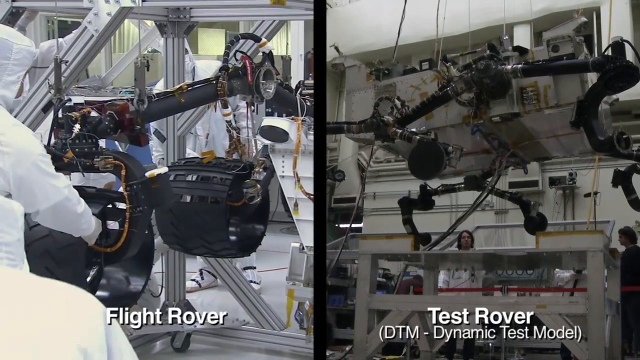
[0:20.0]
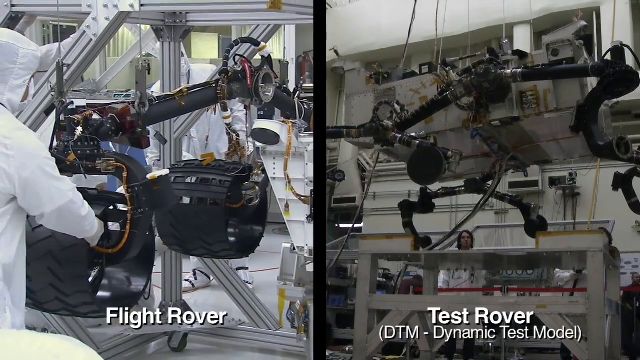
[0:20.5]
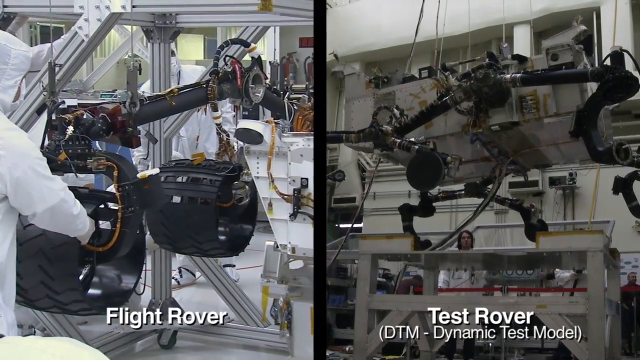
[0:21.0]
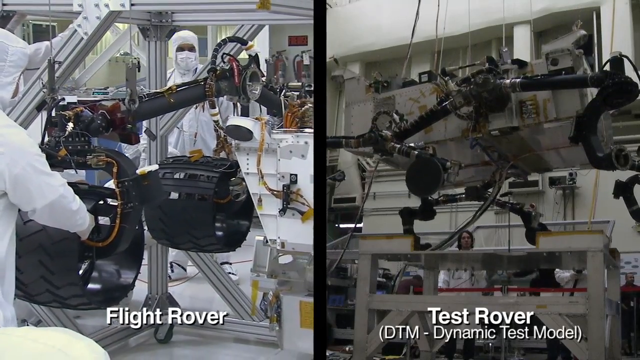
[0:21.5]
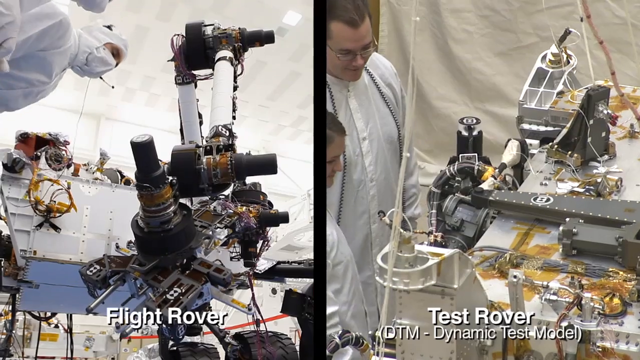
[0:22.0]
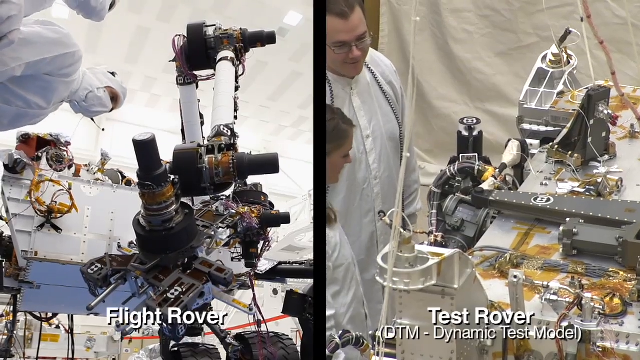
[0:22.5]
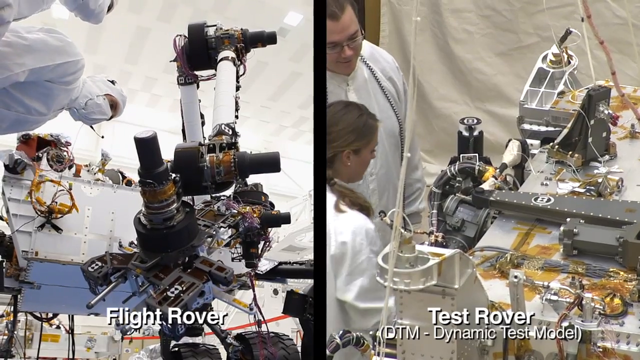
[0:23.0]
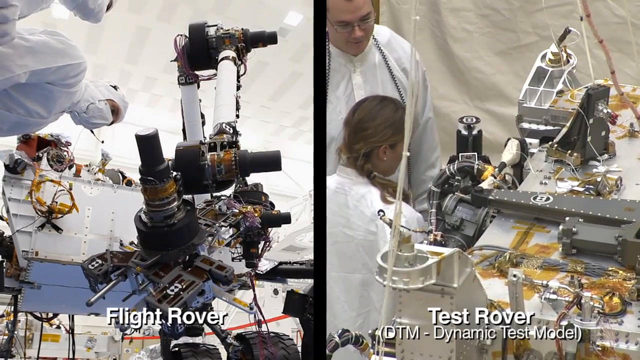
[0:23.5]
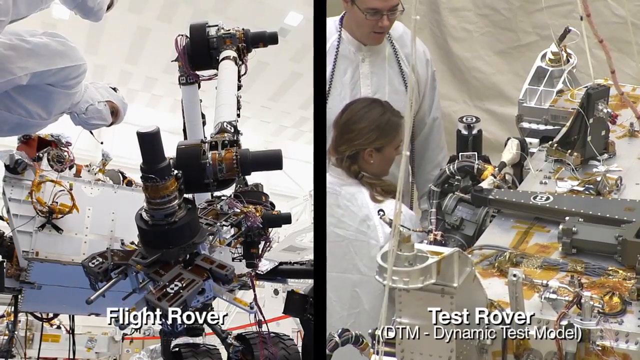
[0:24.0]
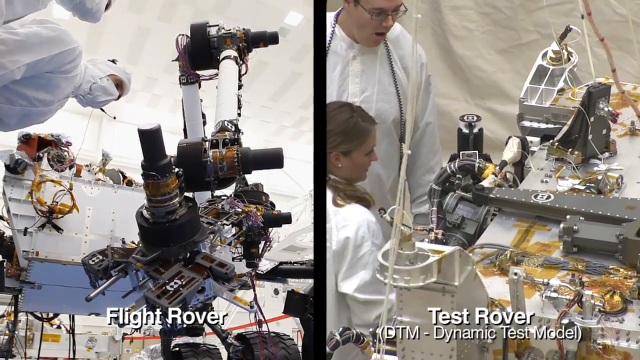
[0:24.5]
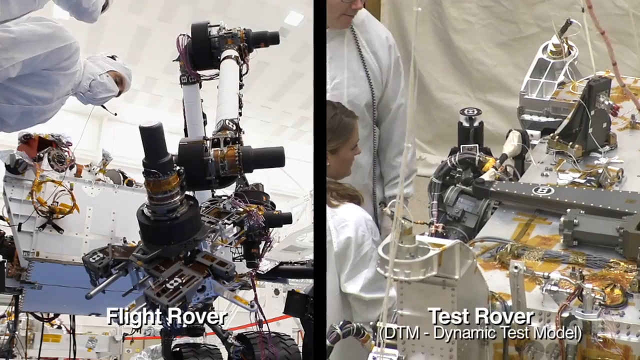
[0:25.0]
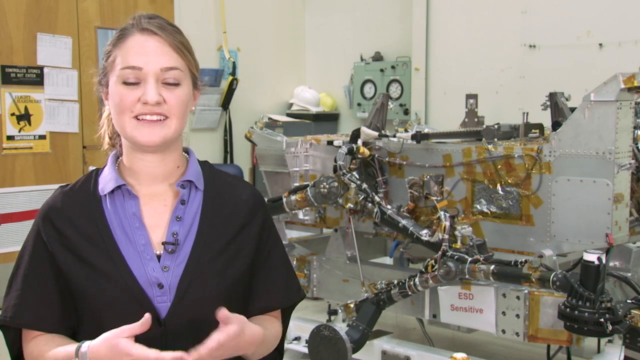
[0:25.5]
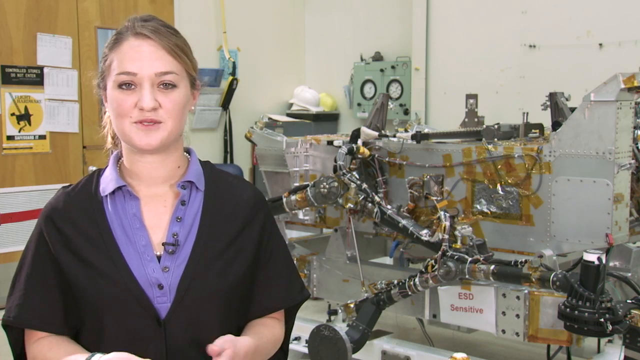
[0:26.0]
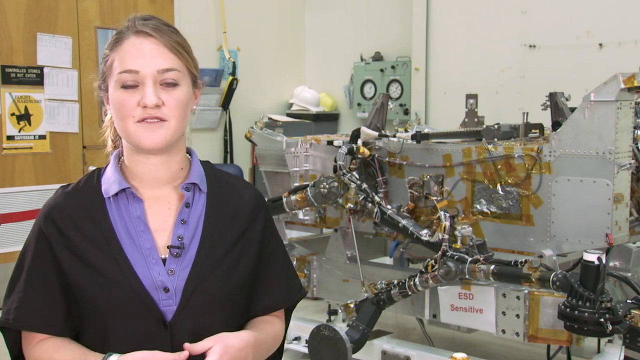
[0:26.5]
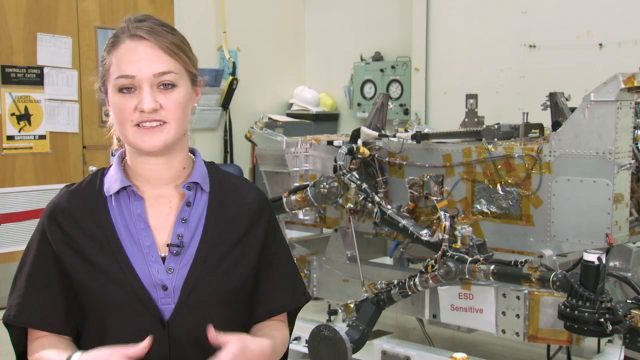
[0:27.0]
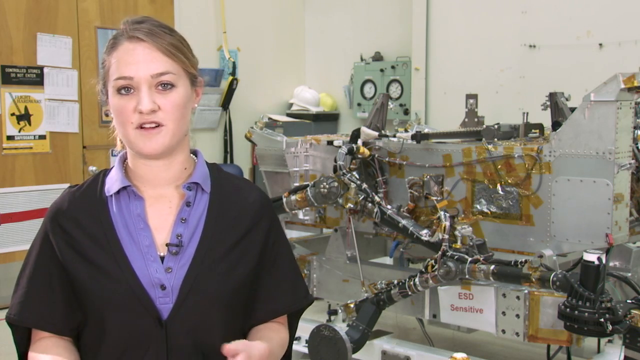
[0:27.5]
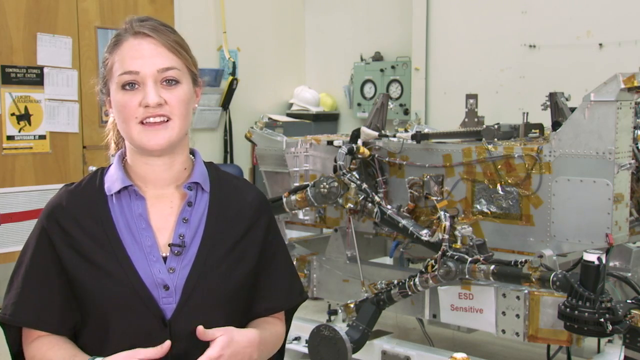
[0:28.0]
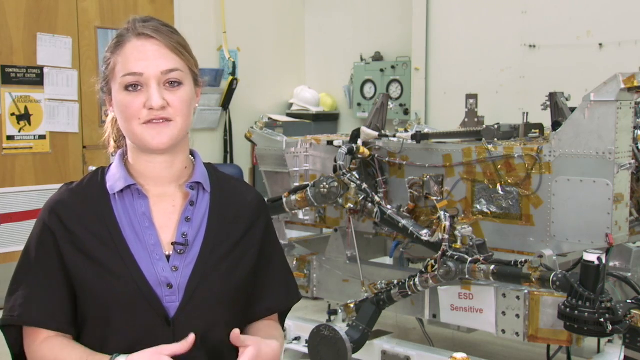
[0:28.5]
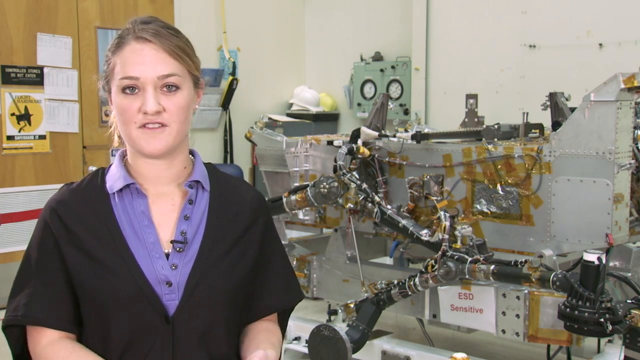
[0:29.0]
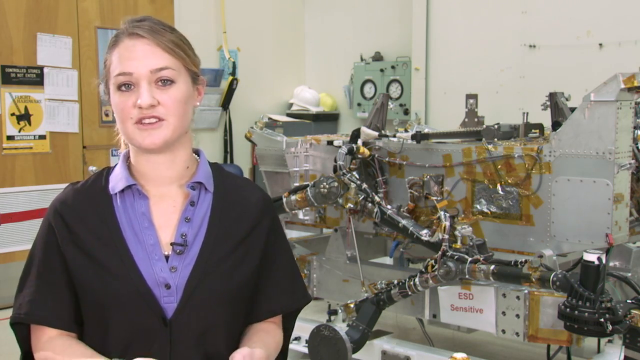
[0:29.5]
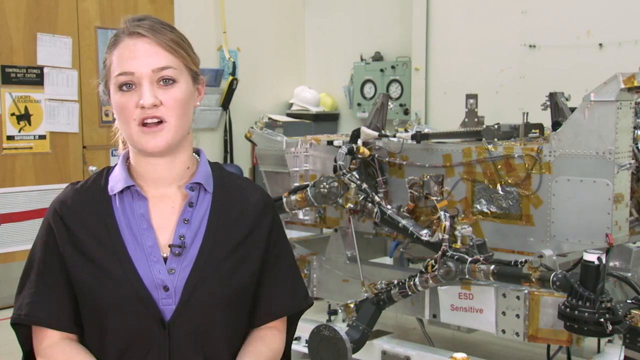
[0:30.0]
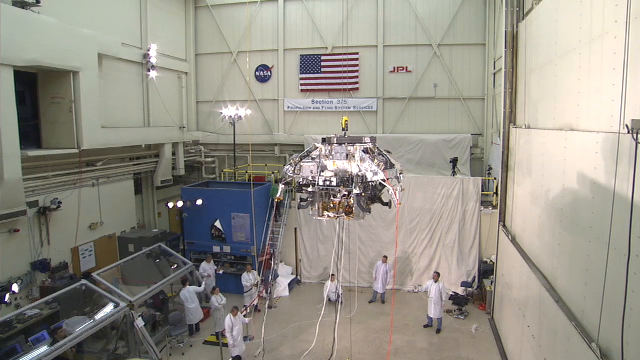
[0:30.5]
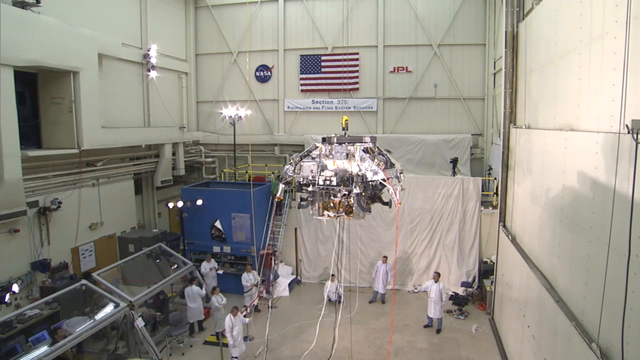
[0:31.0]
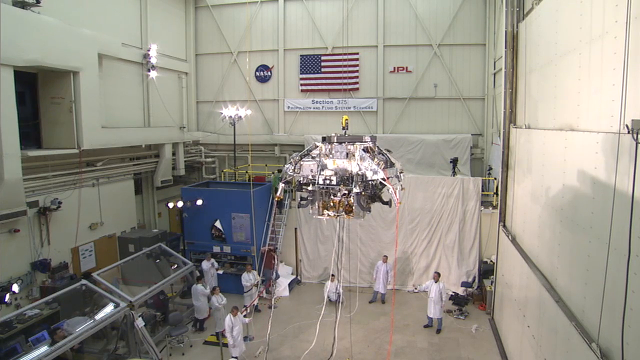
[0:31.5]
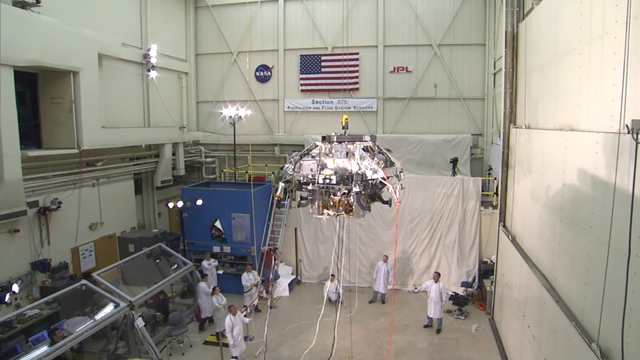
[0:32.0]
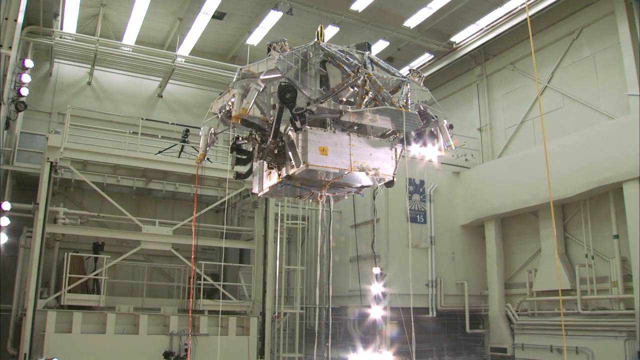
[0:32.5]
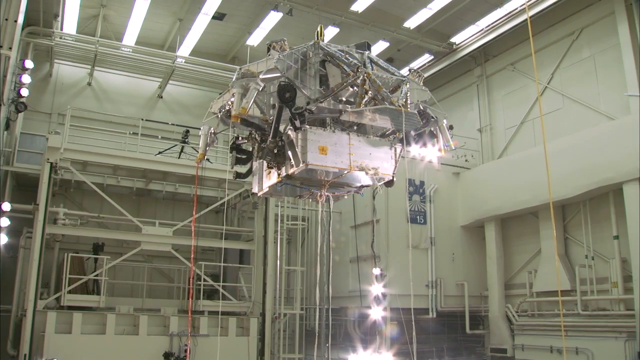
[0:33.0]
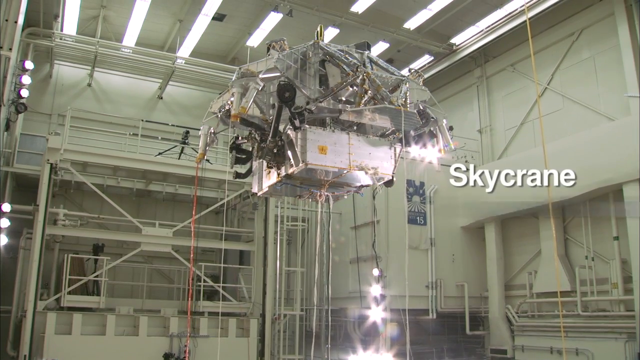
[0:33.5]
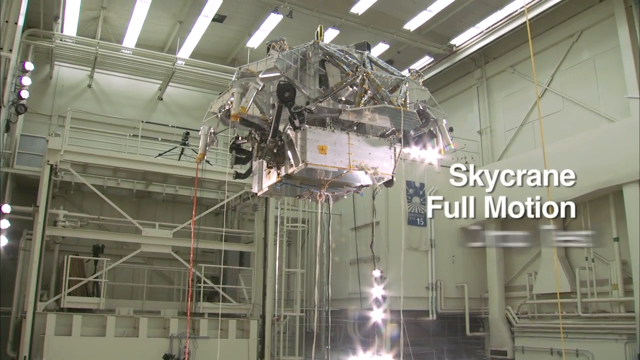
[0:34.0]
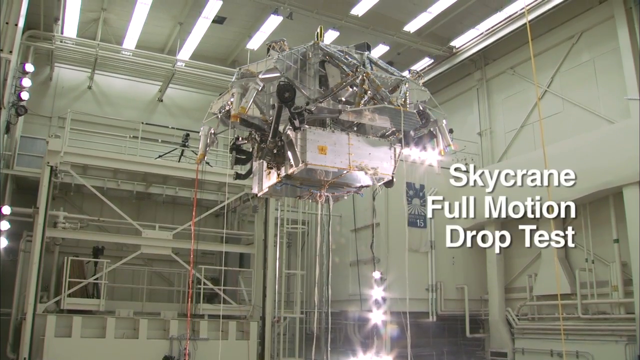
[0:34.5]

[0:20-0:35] A flight rover is on the left side of the frame and a test rover, the DMT Dynamic Test Model, is on the right. A woman with blonde hair, wearing a purple shirt with a black top over it, talks while using her hands, with rover equipment and a white wall behind her. Then "Skycrane Full Motion Drop Test" appears, and the equipment is lifted up inside the building while people below watch; they appear to be scientists in lab gear working on this NASA Mars rover project.